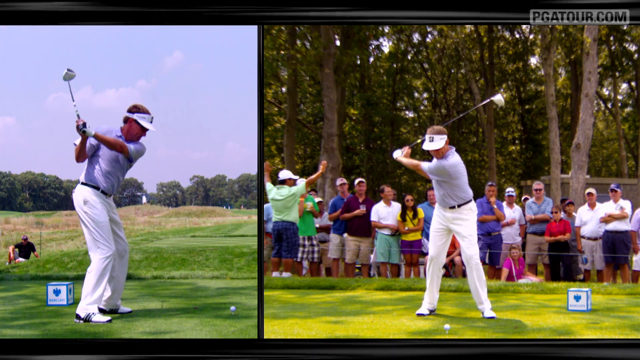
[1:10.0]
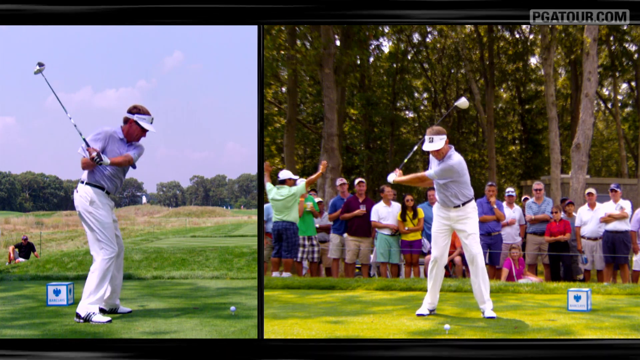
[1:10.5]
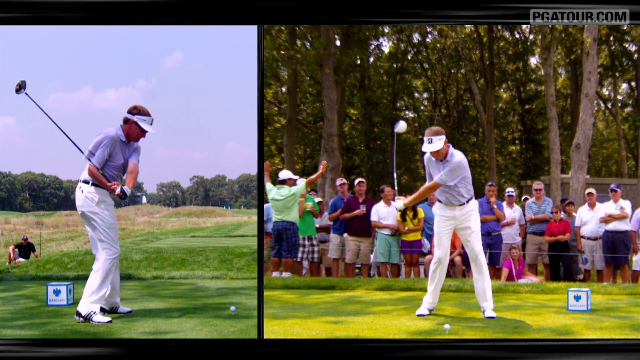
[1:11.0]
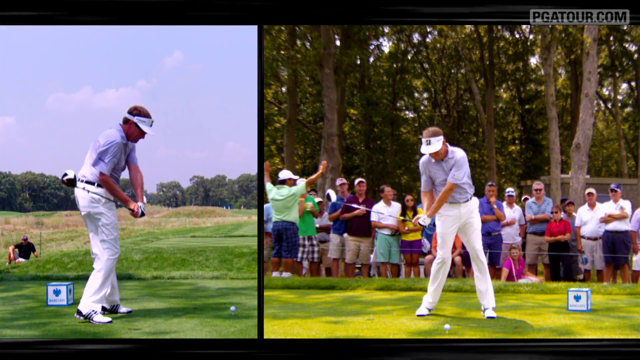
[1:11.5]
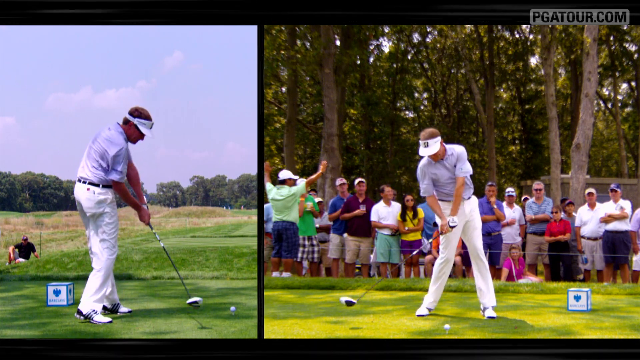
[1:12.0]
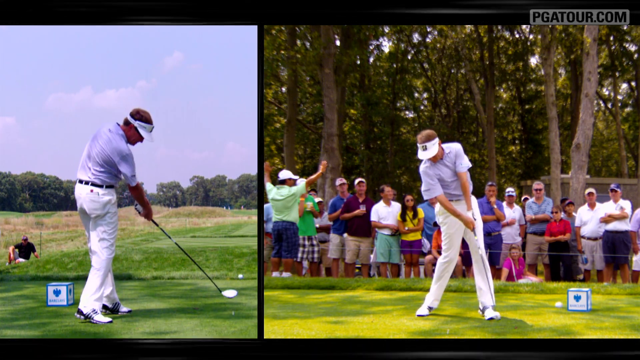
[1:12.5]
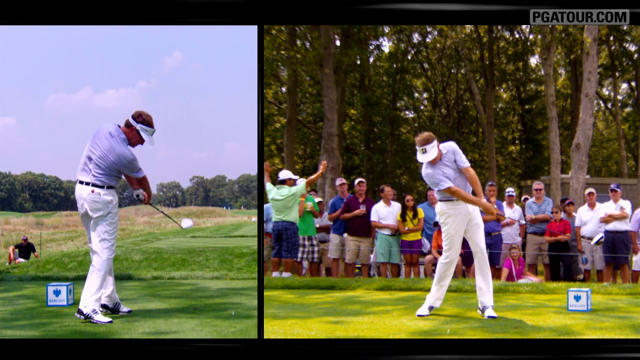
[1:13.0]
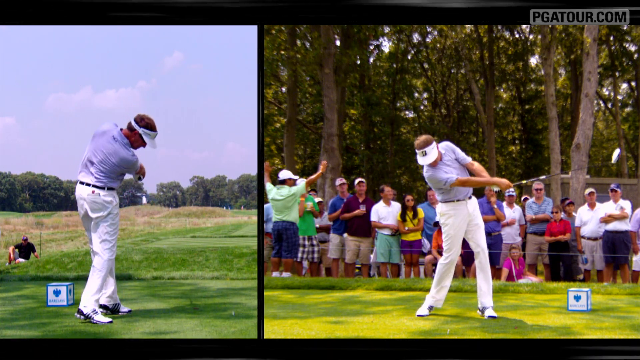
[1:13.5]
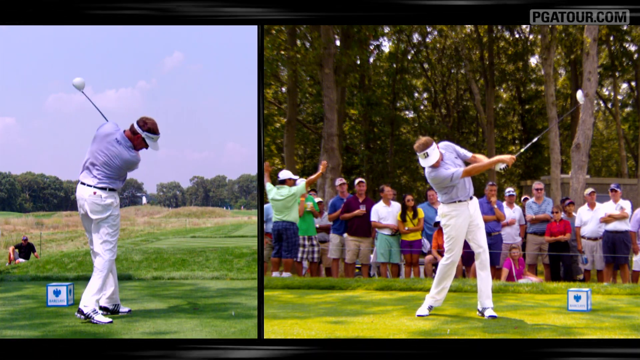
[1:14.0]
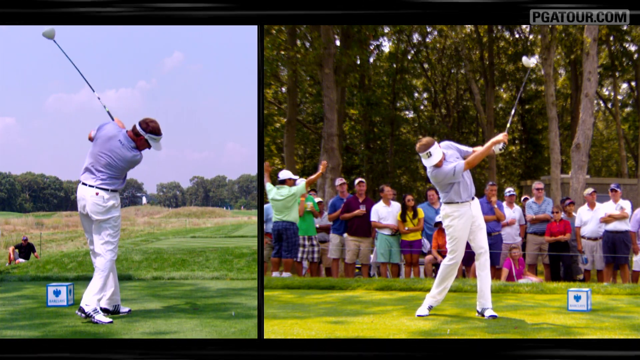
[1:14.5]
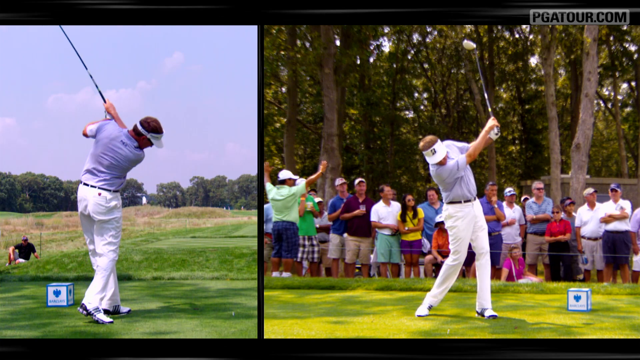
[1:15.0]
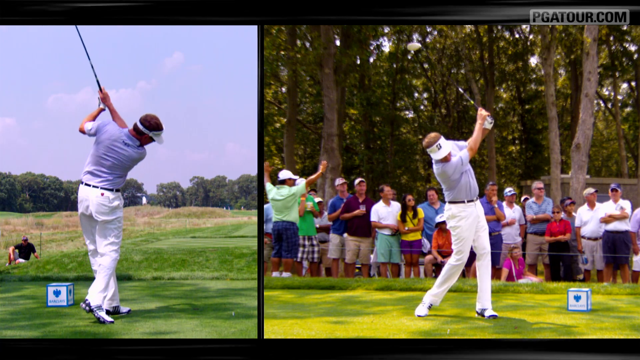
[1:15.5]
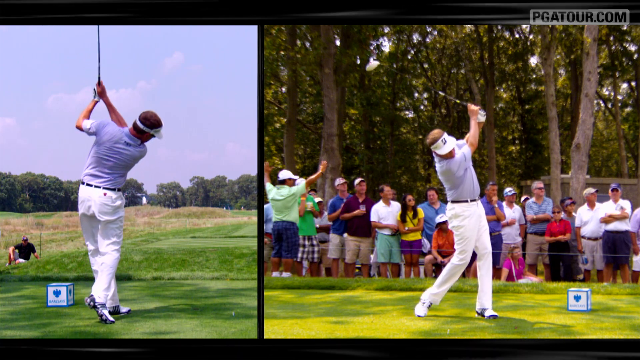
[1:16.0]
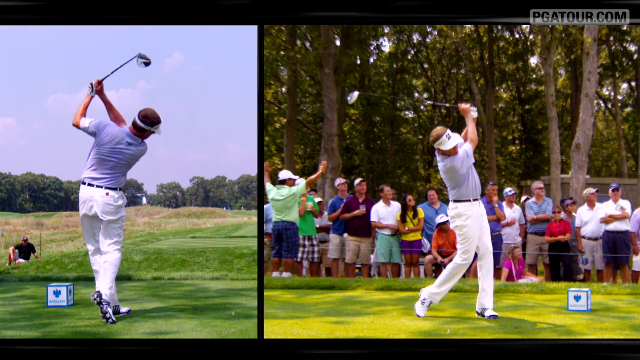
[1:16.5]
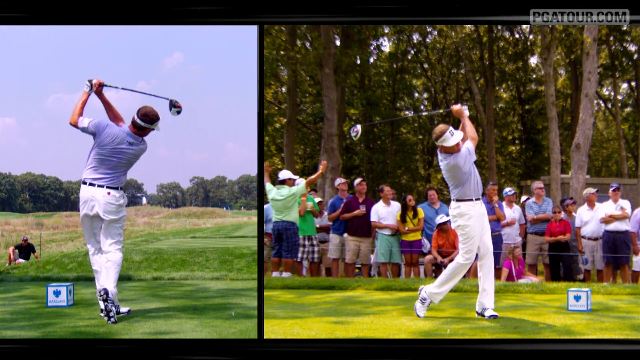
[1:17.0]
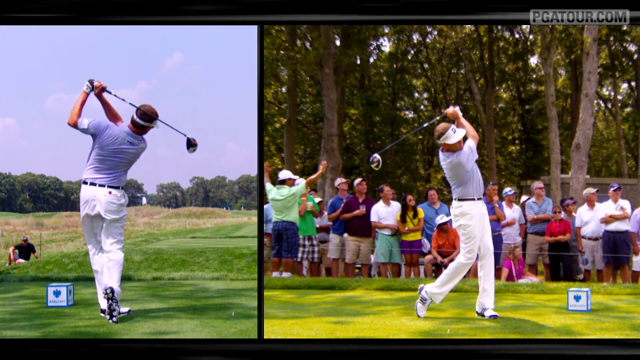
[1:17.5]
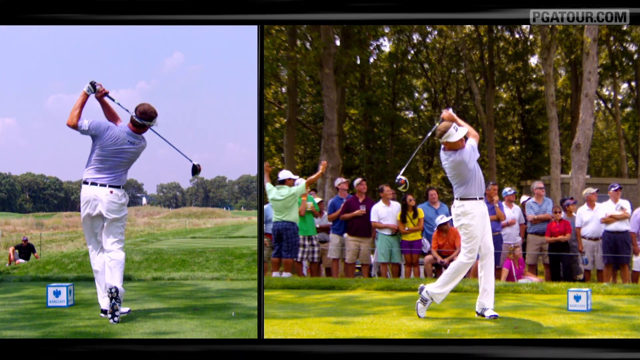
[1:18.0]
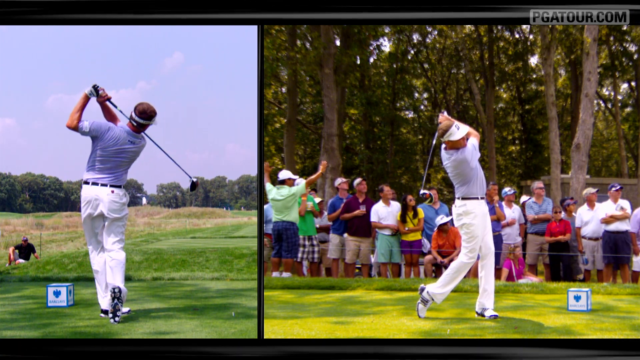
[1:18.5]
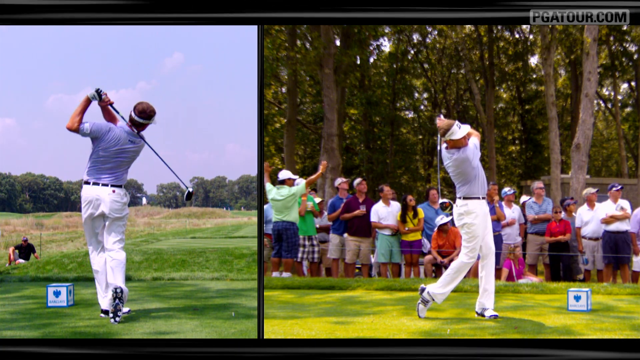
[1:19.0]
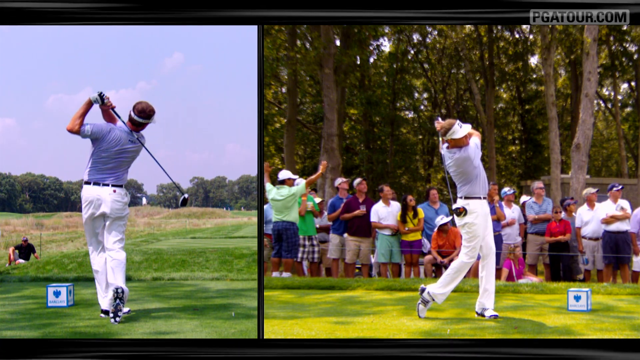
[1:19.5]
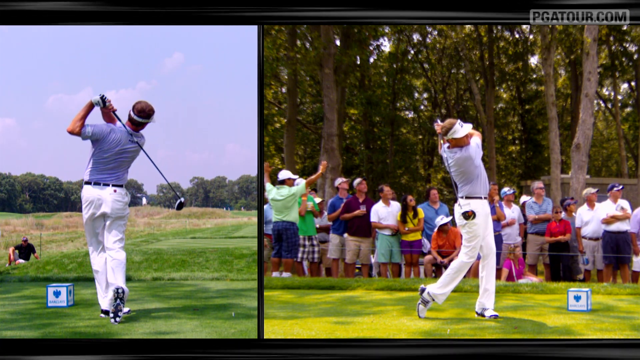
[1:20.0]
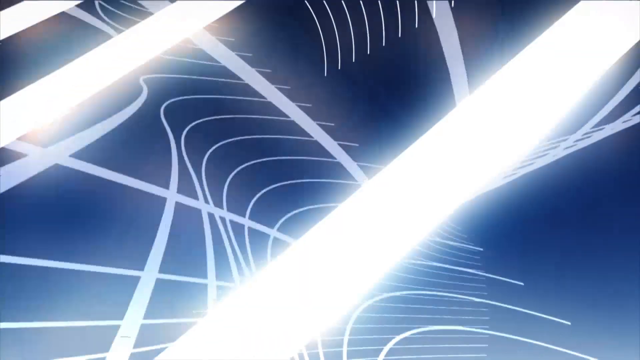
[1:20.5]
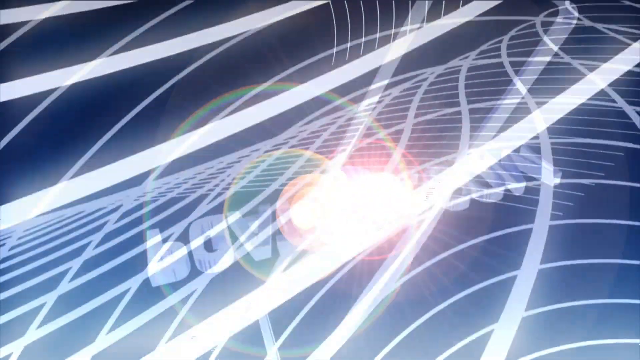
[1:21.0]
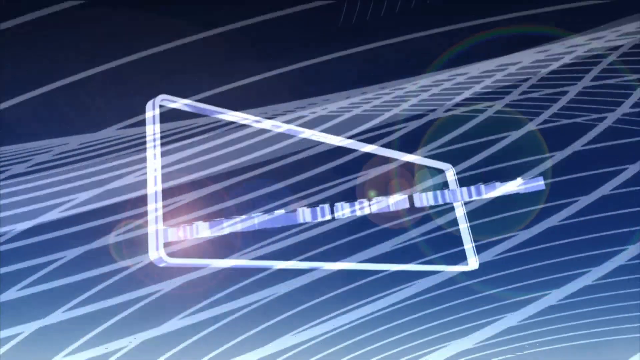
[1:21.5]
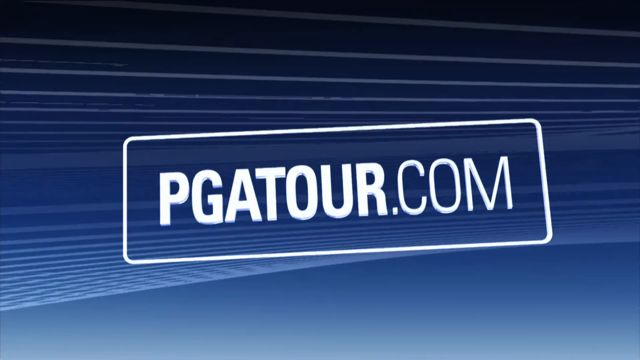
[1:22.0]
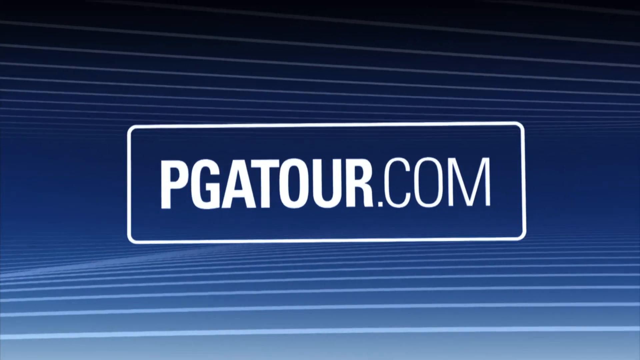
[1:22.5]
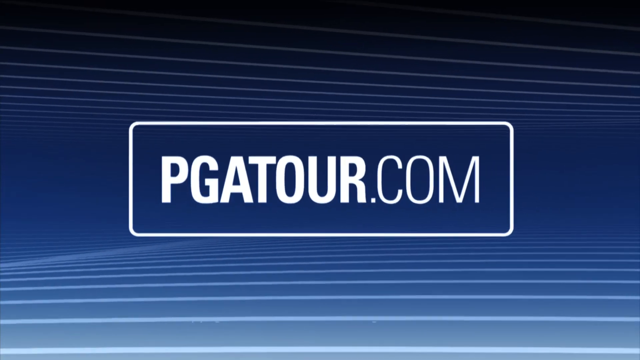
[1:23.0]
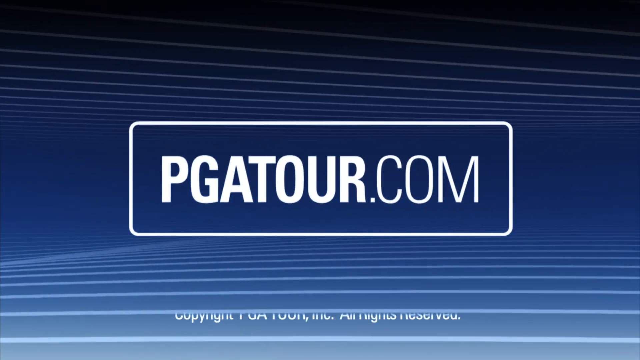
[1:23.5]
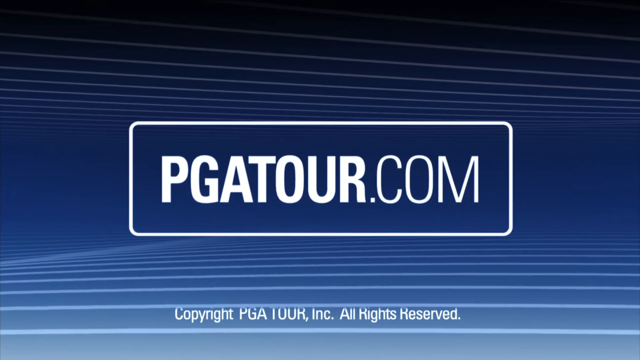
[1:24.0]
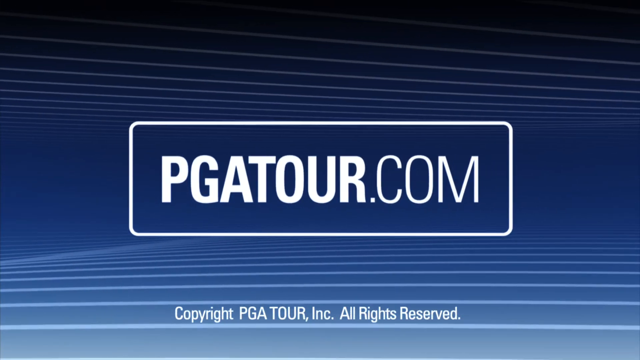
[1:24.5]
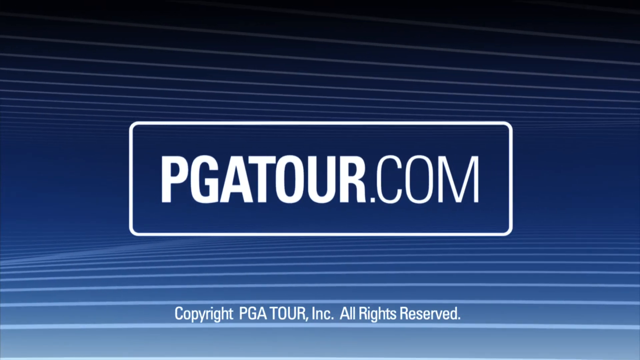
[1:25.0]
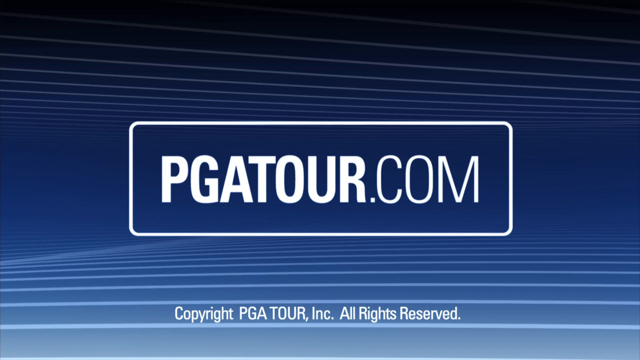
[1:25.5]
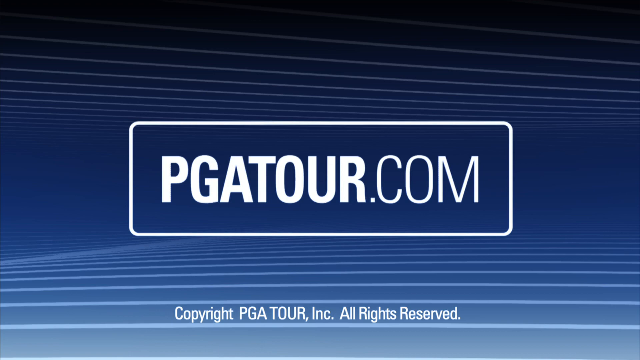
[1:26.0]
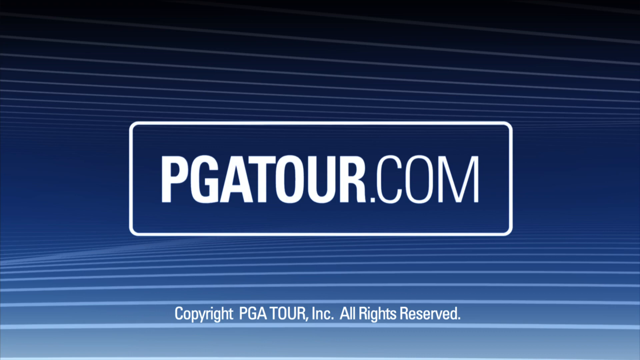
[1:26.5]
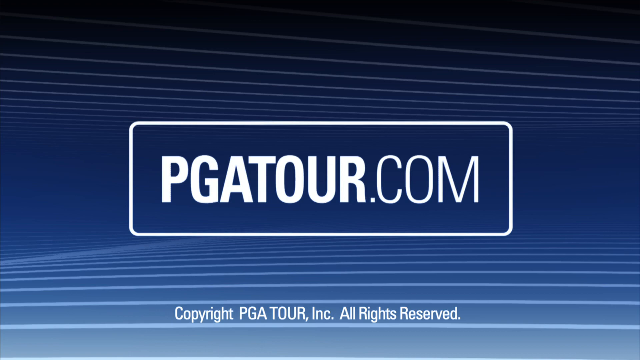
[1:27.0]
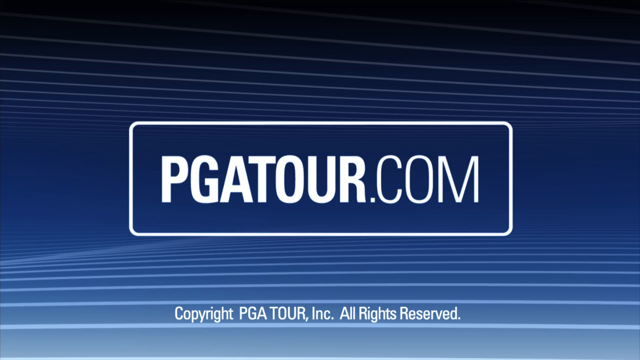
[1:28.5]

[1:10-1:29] In the two side-by-side frames, one from behind him and one from his side, the golfer swings in slow motion, though not as slowly as when he brought his driver backwards. In the left frame, one audience member in the background is sitting down, leaning against his left hand; in the right frame, many audience members are behind him. He connects with the ball, hits it very hard, and looks out towards where the ball goes. The video then transitions to an outro reading "PGA Tour.com" in white letters on a blue background, with "copyright PGA Tour Inc. all rights reserved" at the bottom and white horizontal lines on the top and bottom of the screen.